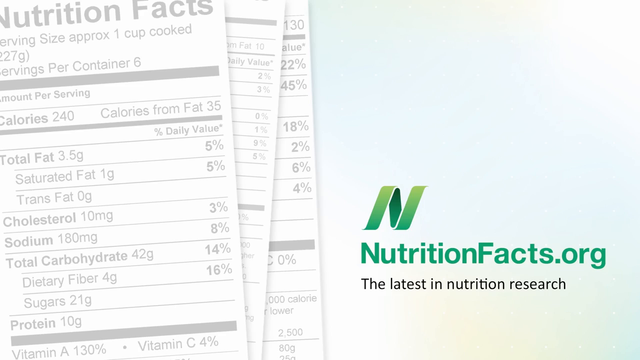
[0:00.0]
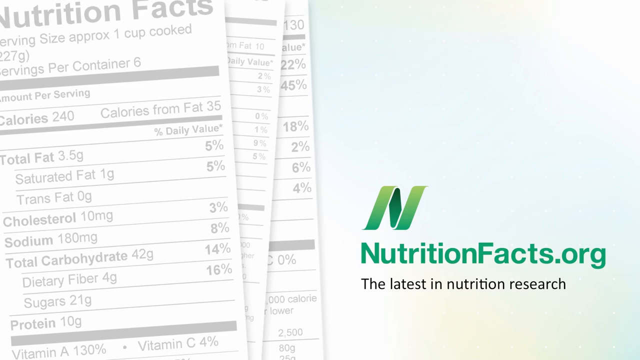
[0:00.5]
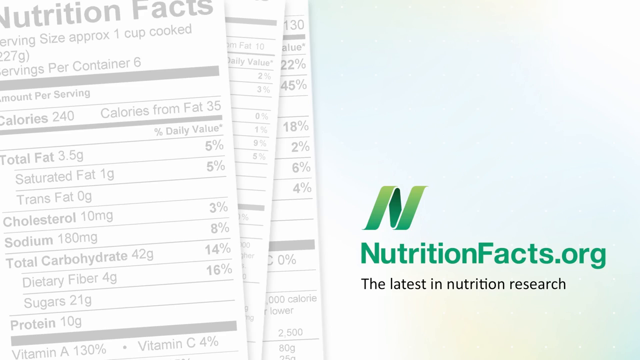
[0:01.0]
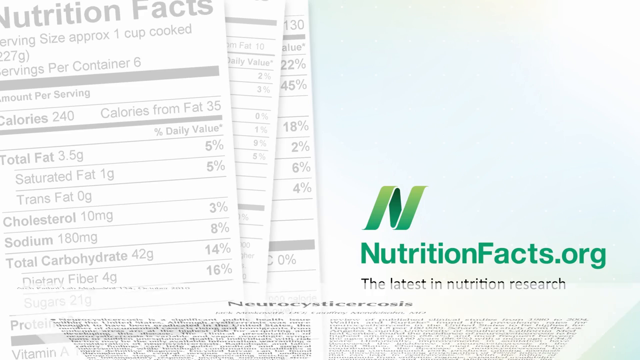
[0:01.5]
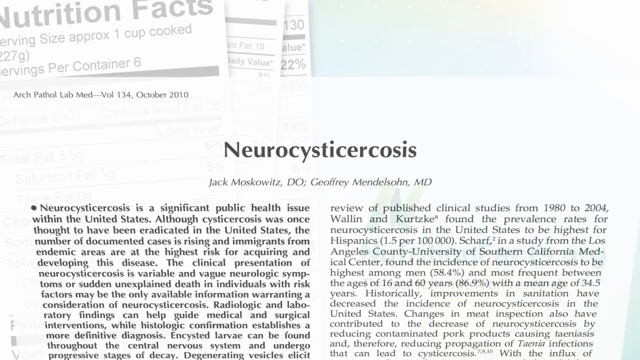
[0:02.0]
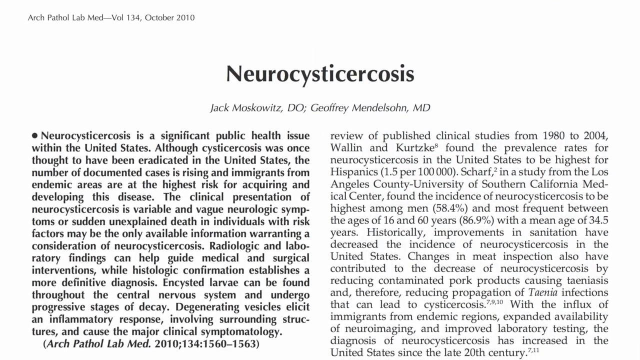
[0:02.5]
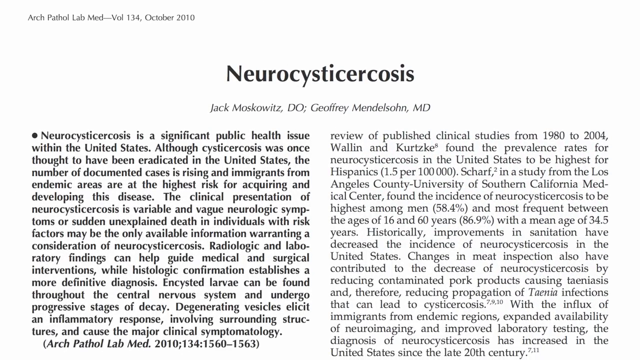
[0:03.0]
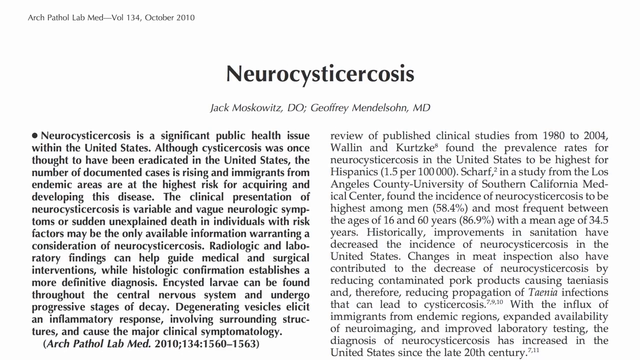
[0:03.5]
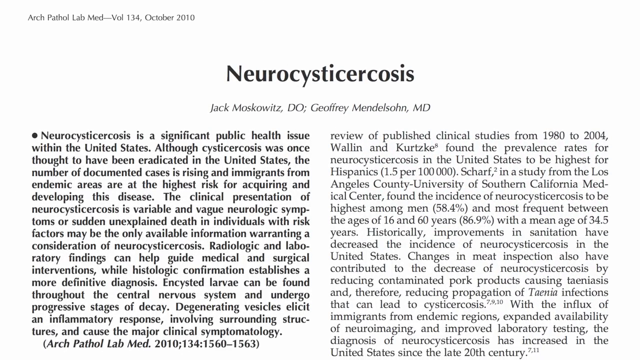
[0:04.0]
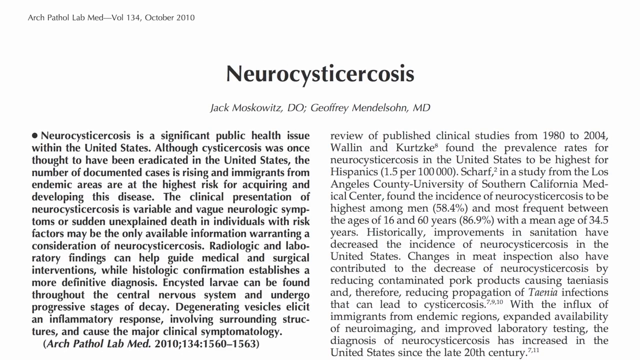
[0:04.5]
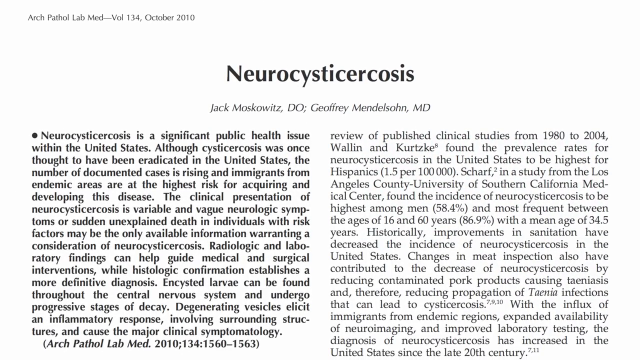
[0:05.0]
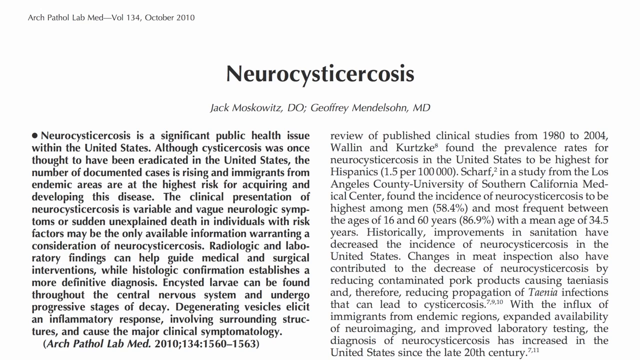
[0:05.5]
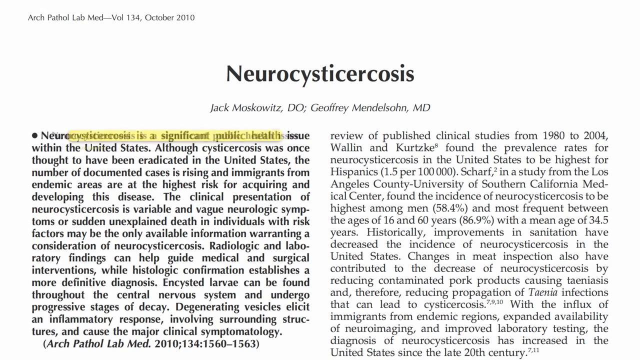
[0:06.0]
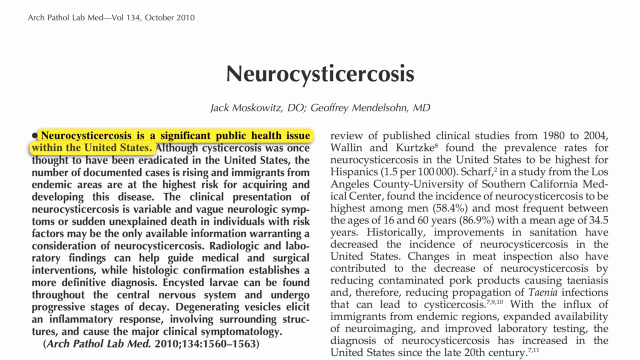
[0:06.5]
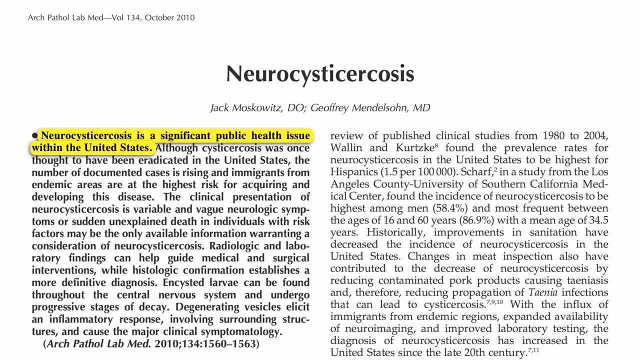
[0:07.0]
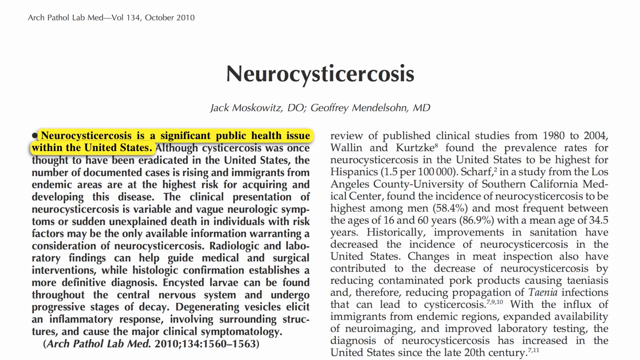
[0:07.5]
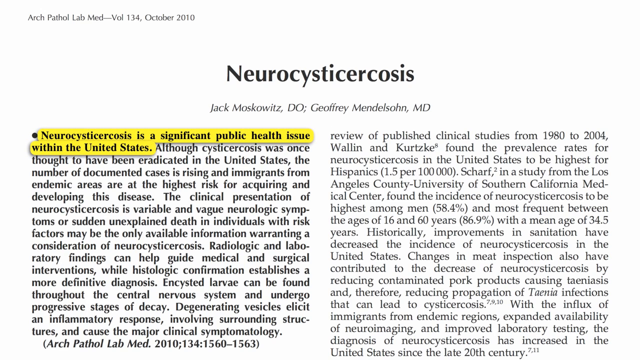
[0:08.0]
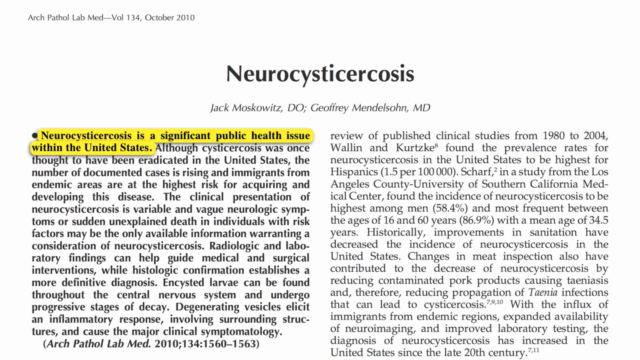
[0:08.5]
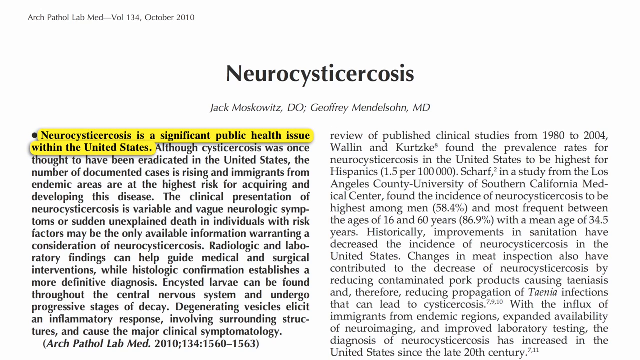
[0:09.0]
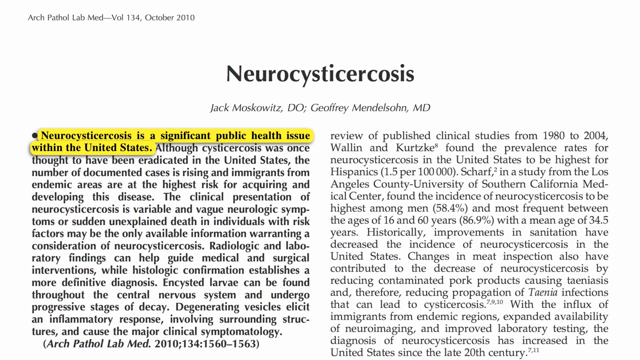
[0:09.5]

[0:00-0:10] The video is by nutritionfacts.org, subtitled "the latest in nutrition research." It opens with the Nutrition Facts logo; in the background are the sort of labels seen on foods that disclose fat, cholesterol, sodium and sugar levels. A page from an academic paper about neurocysticercosis follows, stating that it is a significant public health issue within the USA, once thought to have been eliminated, with cases rising partly because they are imported by immigrants. The disease seems to be spread by animal life. The paper is written by Jack Moskowitz and Jeffrey Mendelsohn.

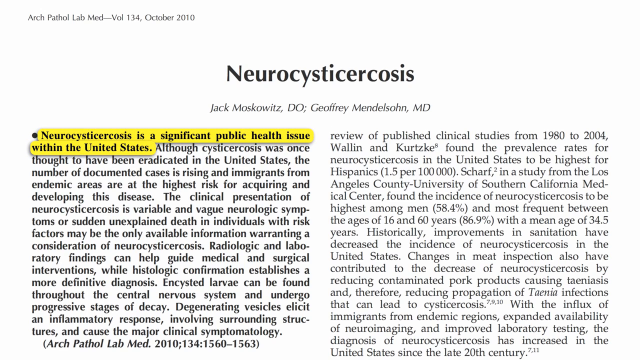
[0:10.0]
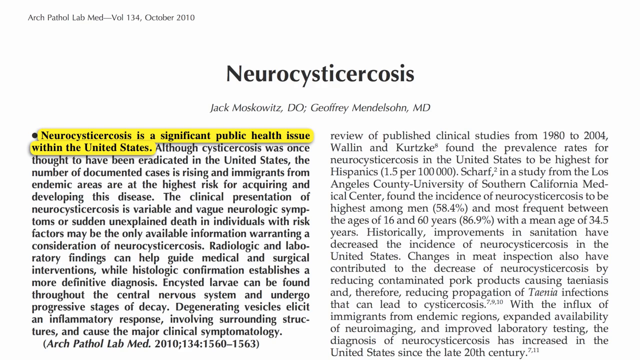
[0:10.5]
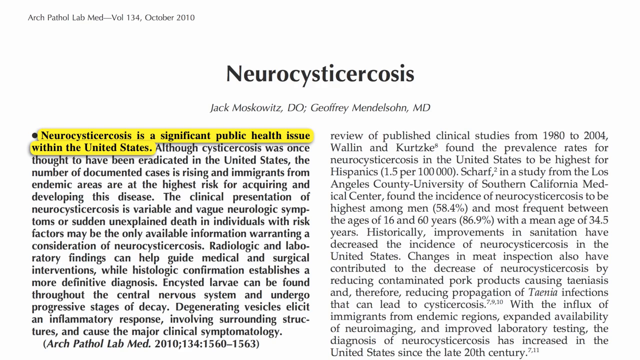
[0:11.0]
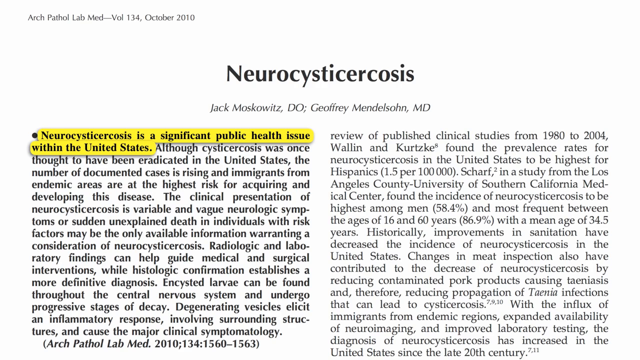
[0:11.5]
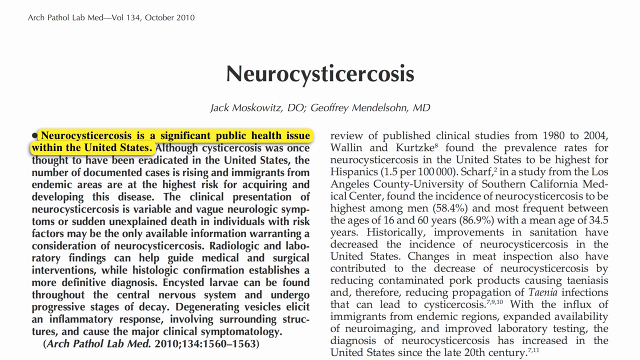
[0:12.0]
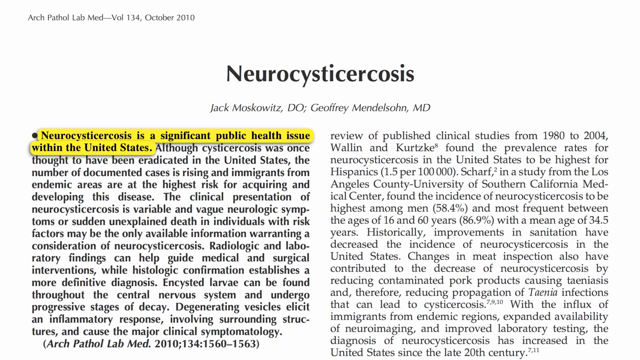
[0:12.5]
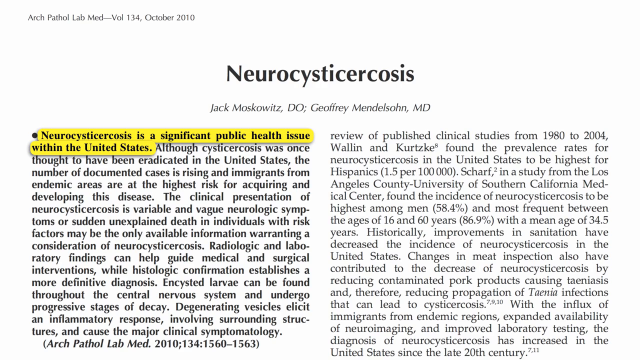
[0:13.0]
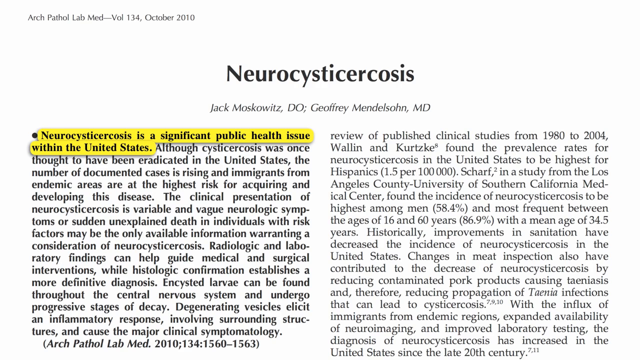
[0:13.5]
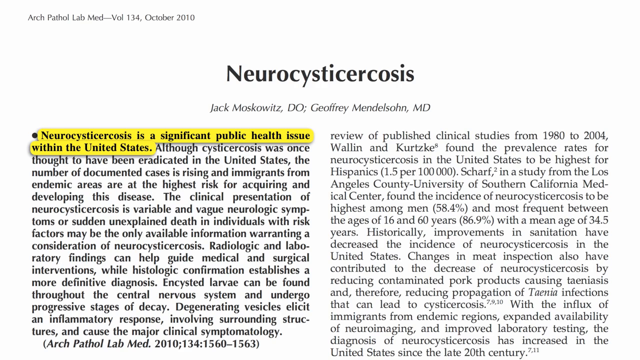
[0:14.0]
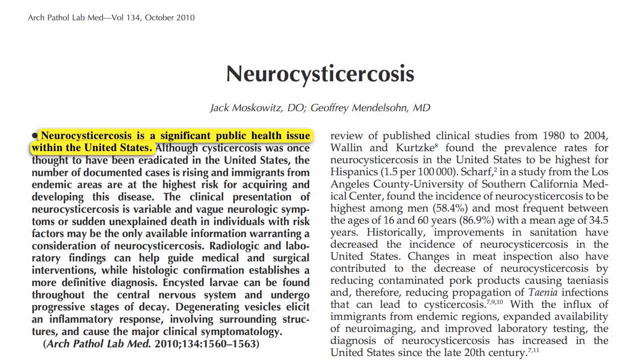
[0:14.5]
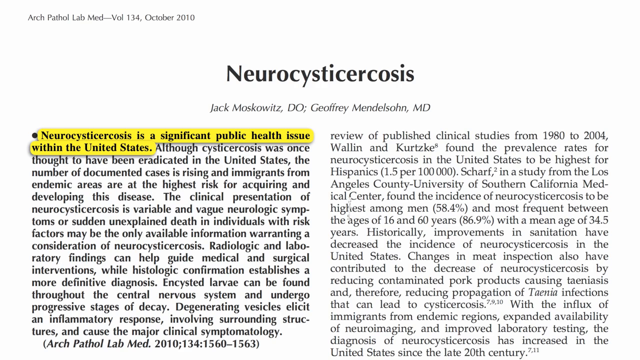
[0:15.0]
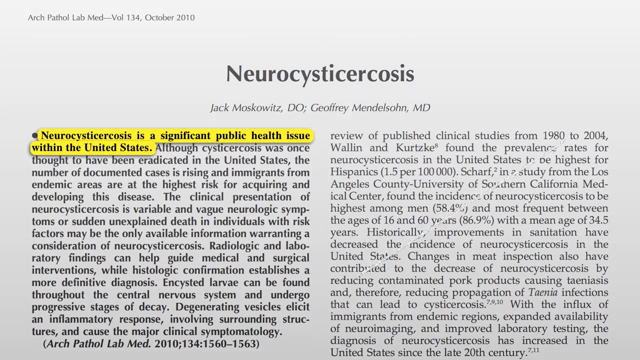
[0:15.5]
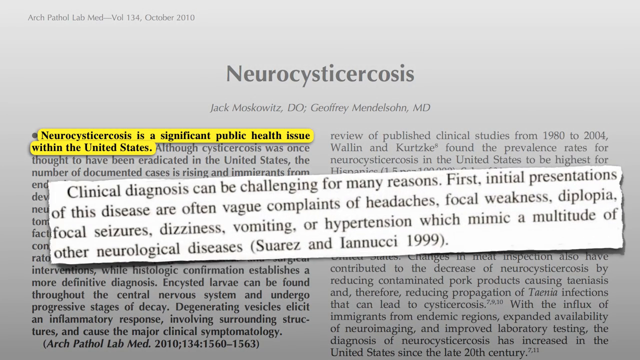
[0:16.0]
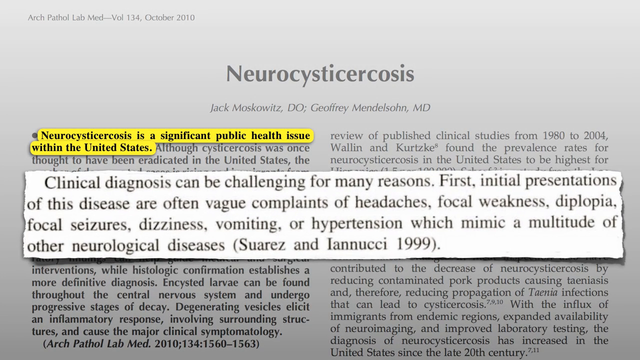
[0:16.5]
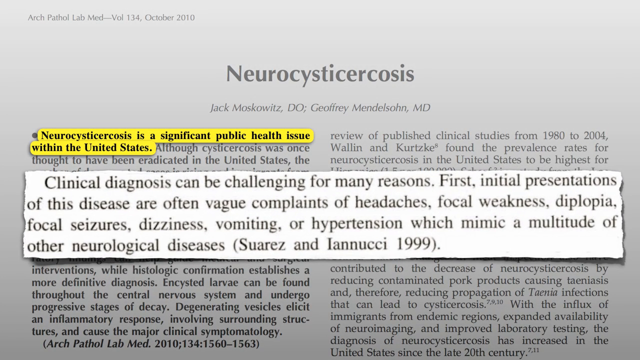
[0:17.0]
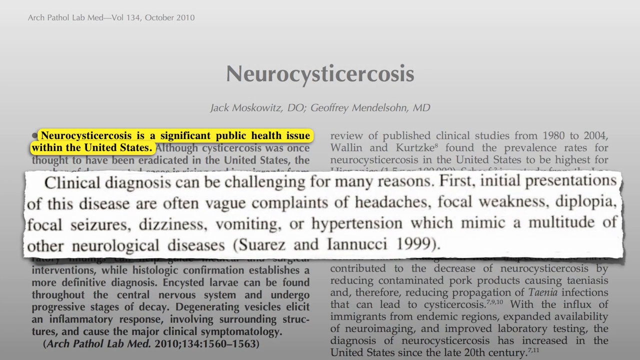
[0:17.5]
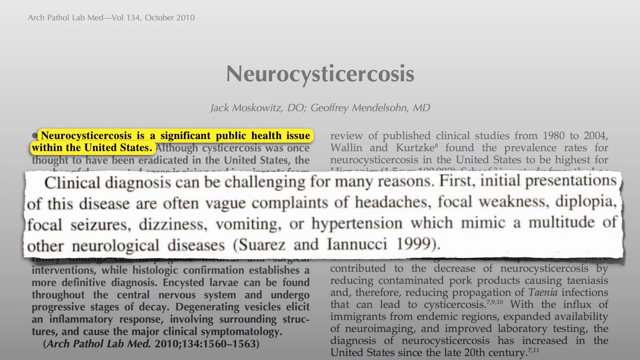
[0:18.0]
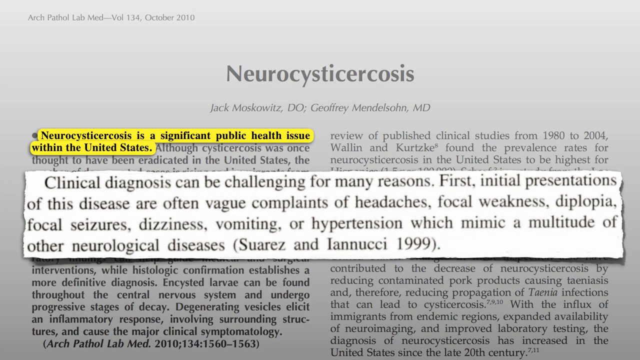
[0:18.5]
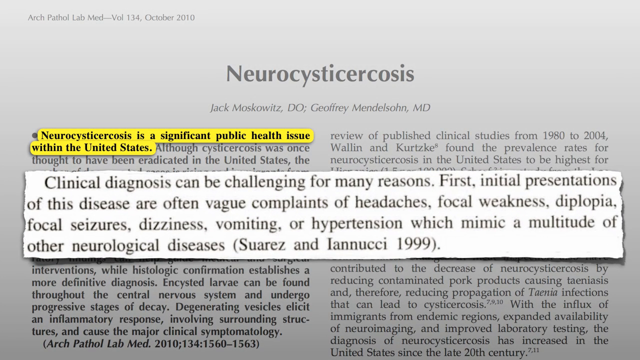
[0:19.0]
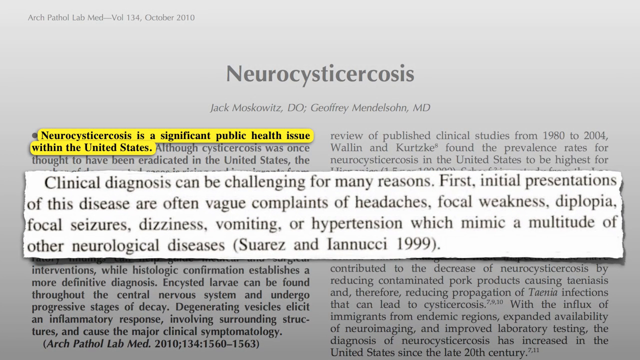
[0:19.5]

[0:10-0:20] The paper on neurocysticerosis stays on screen; it was published in Arc Pathol Lab Med, volume 134, October 2010. It warns that clinical diagnosis of the disease can be challenging, as symptoms are often vague, such as headaches, seizures, dizziness or vomiting, which could also apply to a multitude of other neurological conditions. The two authors cite evidence about the vague symptoms, referring to research conducted in 1999 by Suárez and Iannucci.